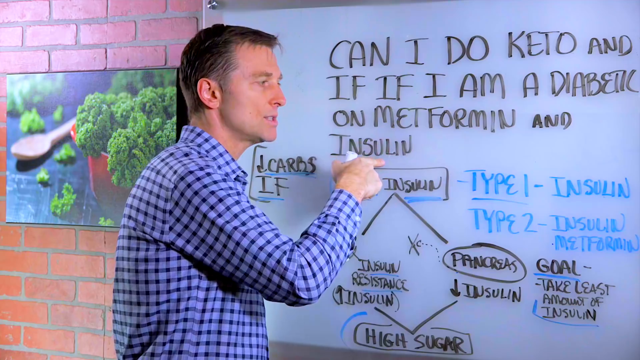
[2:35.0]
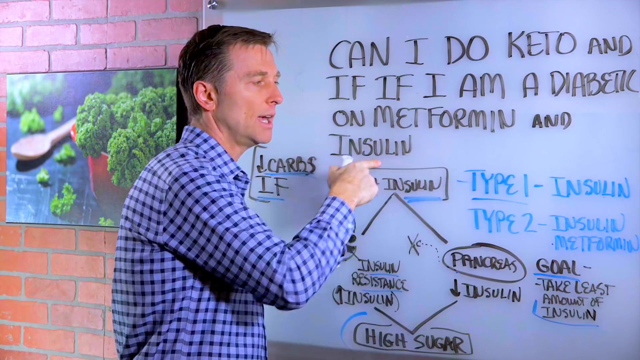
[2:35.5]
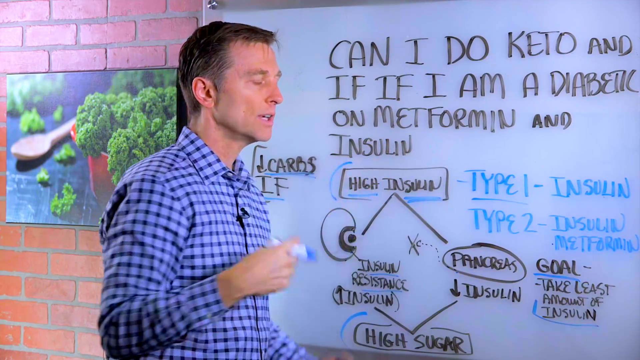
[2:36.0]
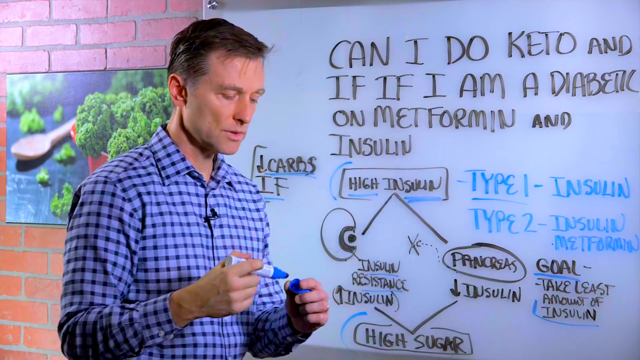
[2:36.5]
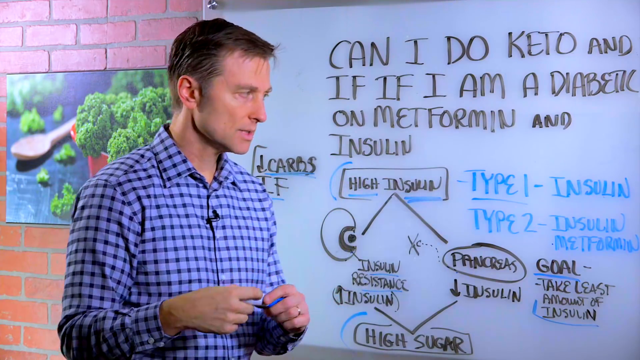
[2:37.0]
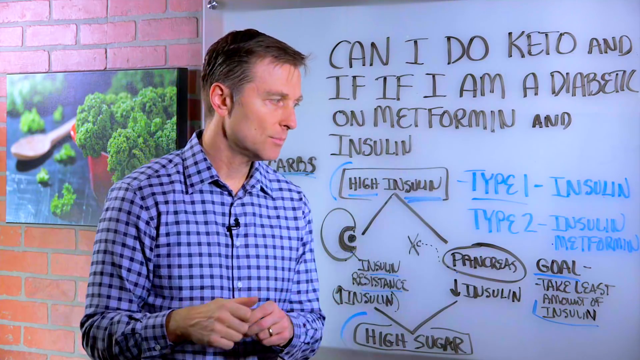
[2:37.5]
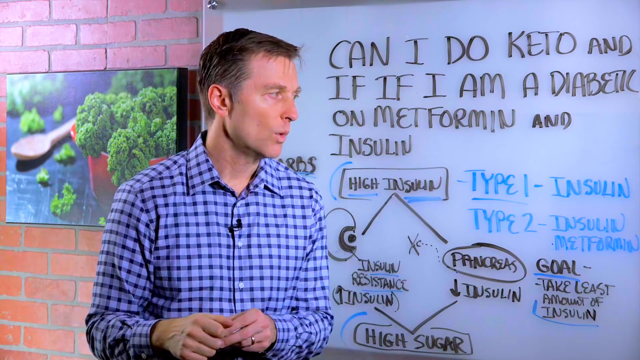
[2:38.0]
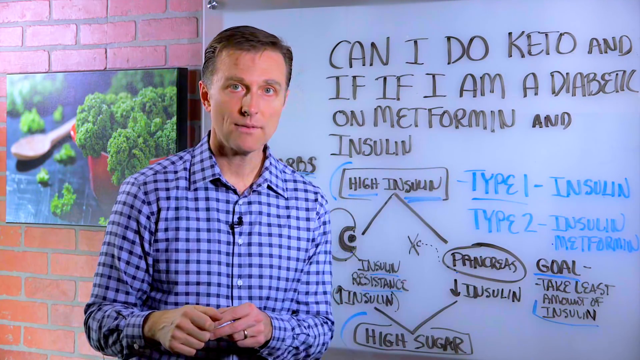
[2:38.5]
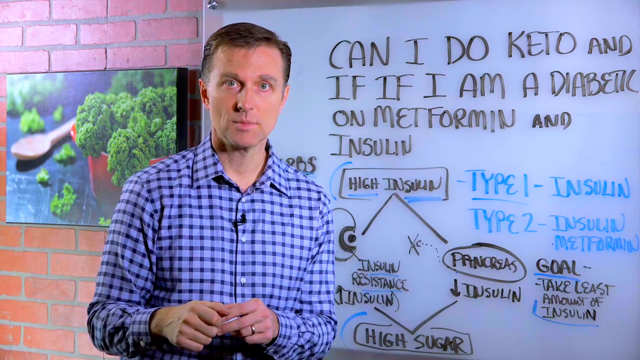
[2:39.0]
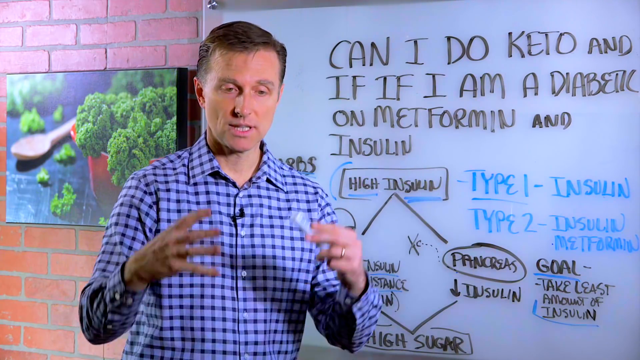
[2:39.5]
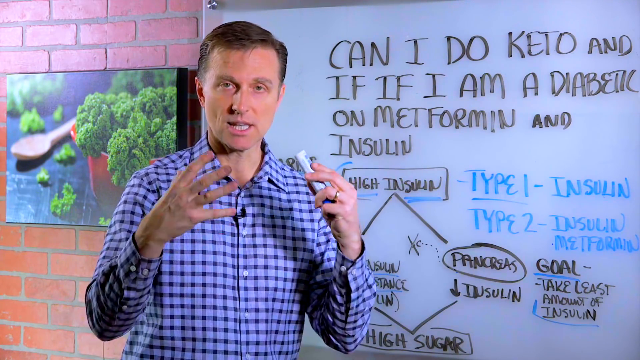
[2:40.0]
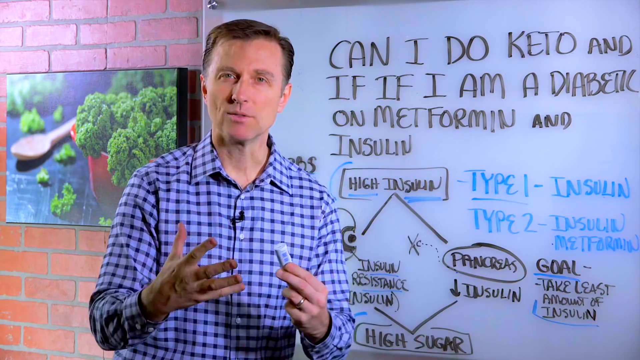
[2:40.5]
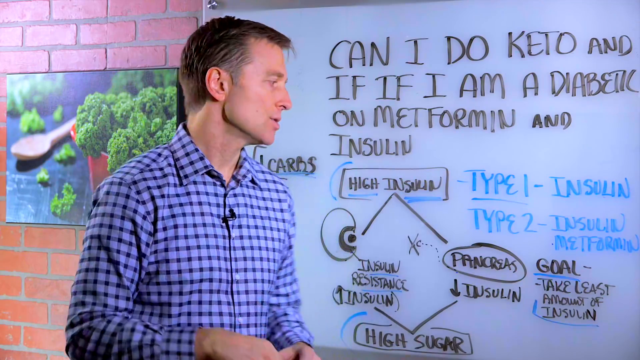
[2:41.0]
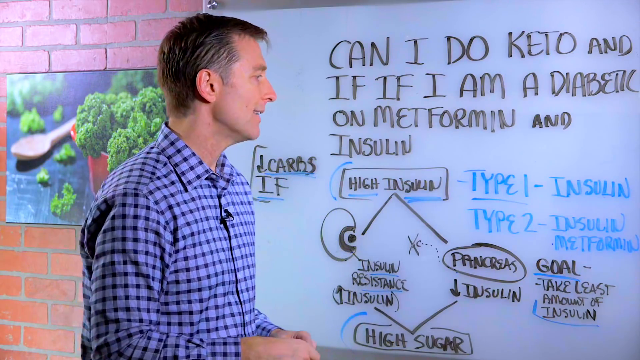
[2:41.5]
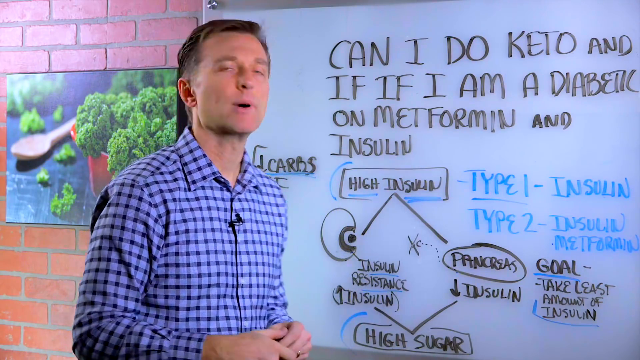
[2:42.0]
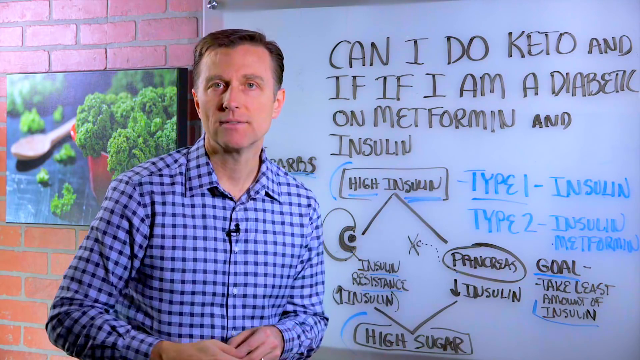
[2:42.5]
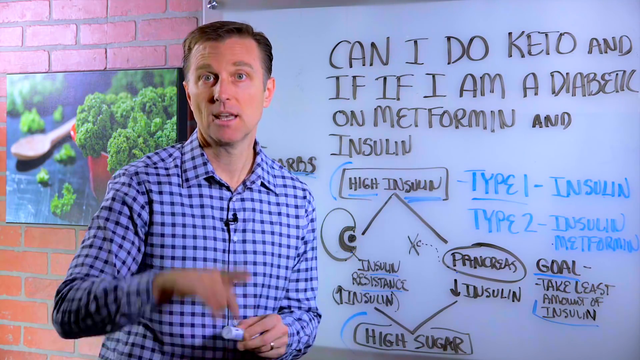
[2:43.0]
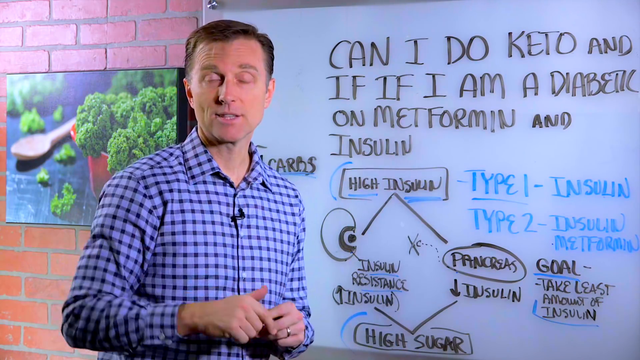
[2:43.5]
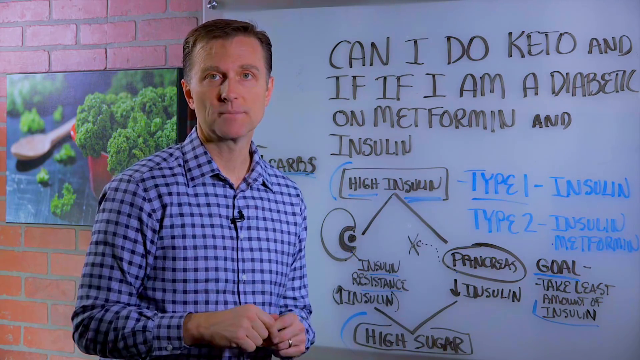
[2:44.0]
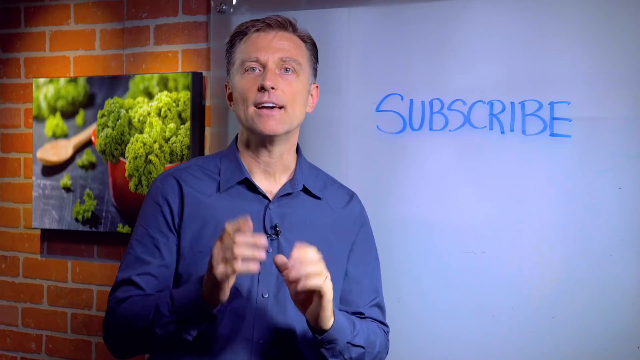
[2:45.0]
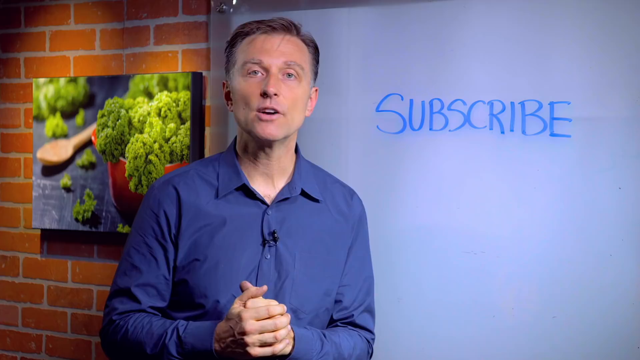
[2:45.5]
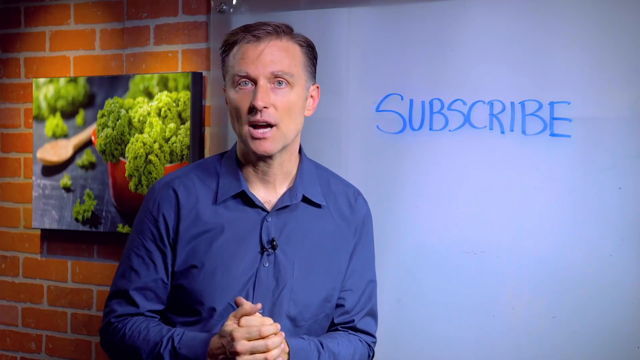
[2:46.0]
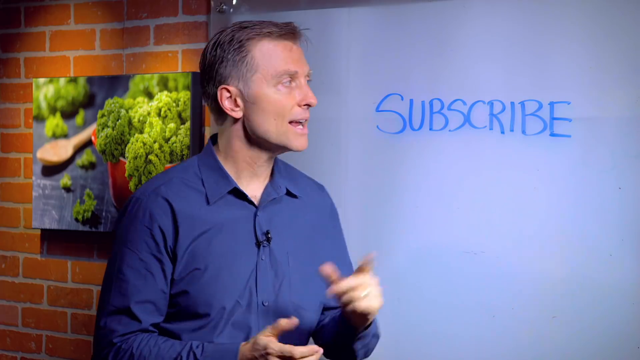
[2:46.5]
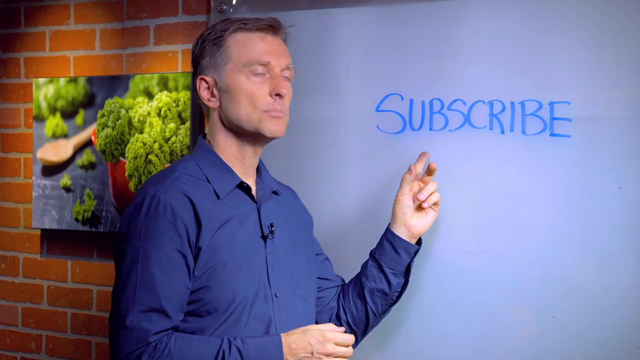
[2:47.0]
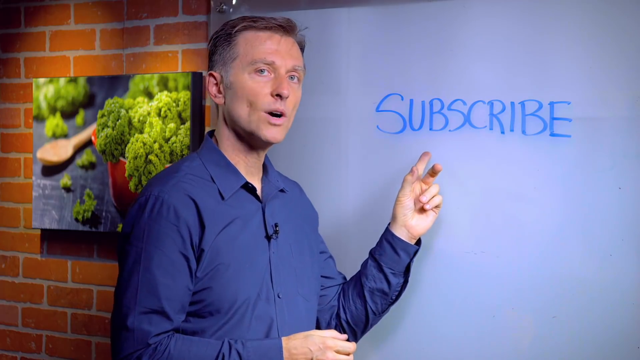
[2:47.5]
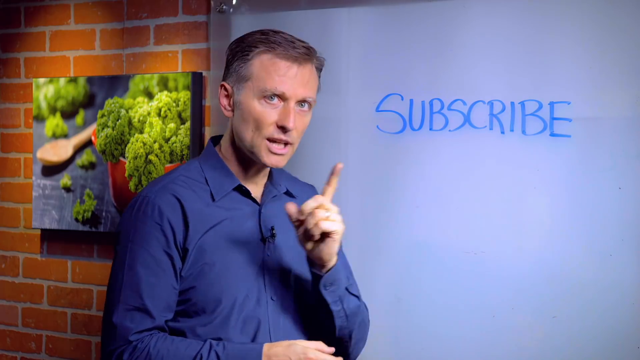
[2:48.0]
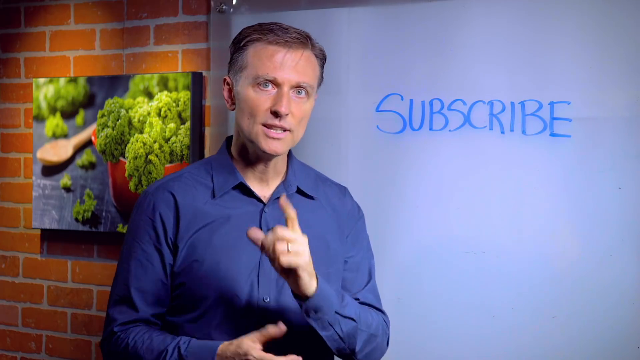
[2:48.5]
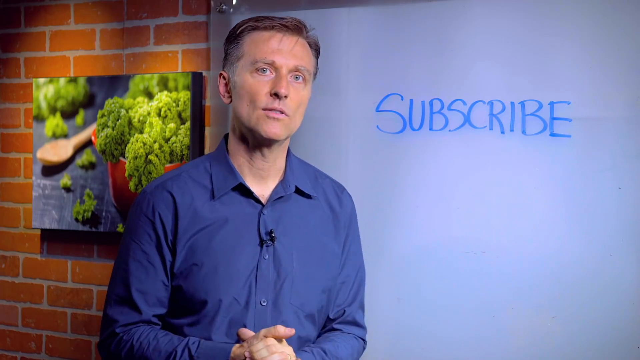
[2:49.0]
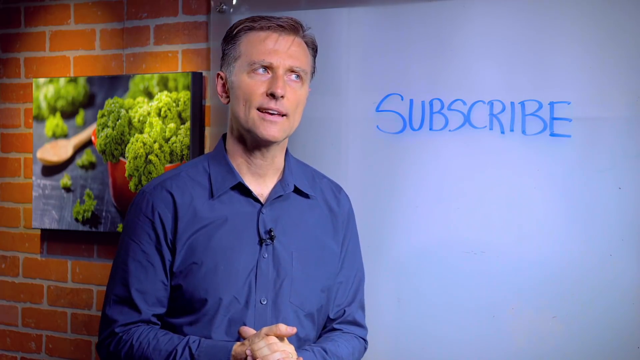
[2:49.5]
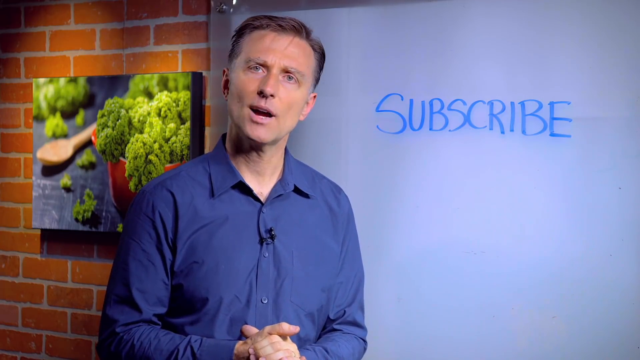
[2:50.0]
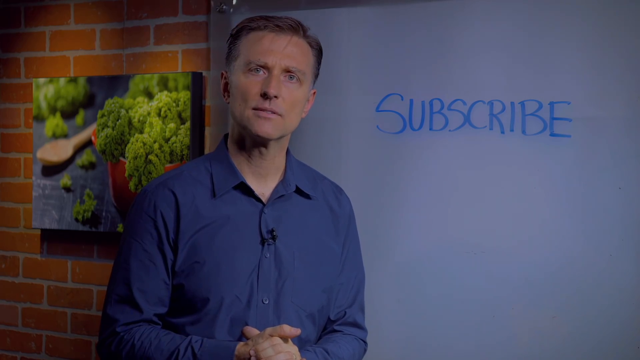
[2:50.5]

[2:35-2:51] The man holds the blue marker open with the cap off, points to the board, and puts the cap back on. He points to the part of the board that says insulin and talks with his hands directly to the camera. At the end, there is an edit to him wearing a different shirt, a gray button-up instead of the blue plaid button-up, with "subscribe" written in blue marker on the whiteboard behind him as he talks directly to the camera.